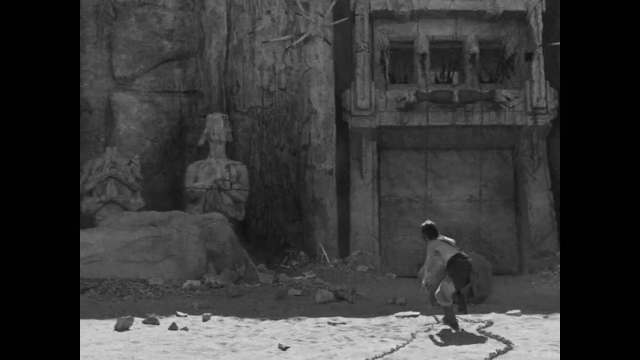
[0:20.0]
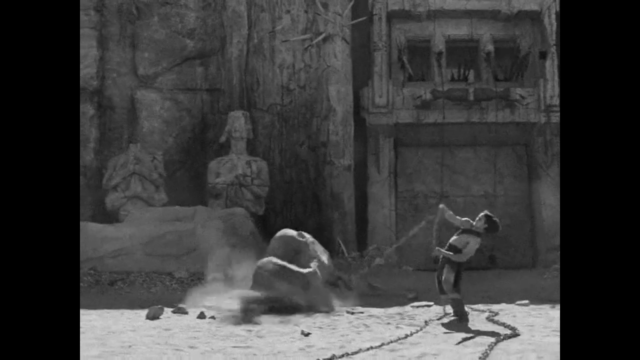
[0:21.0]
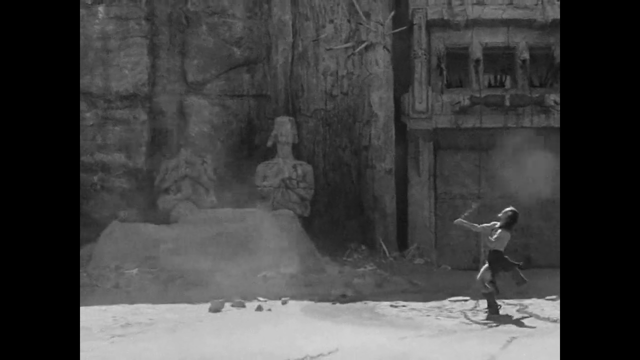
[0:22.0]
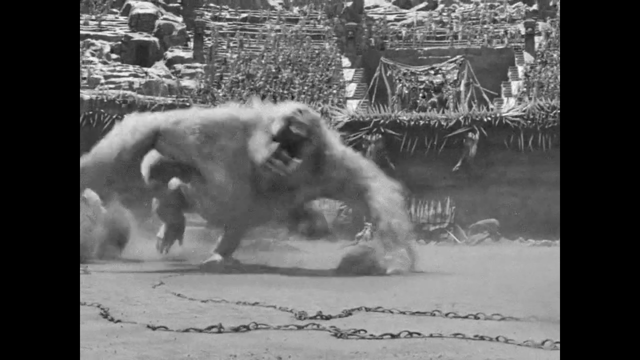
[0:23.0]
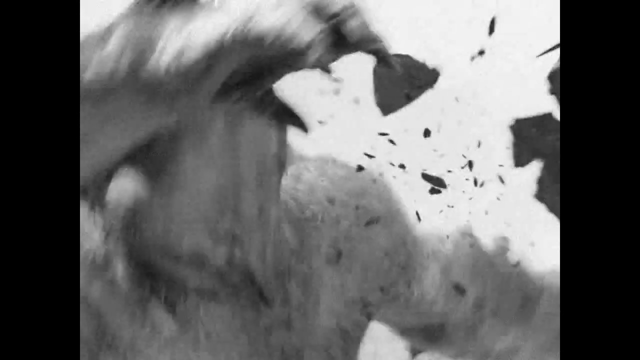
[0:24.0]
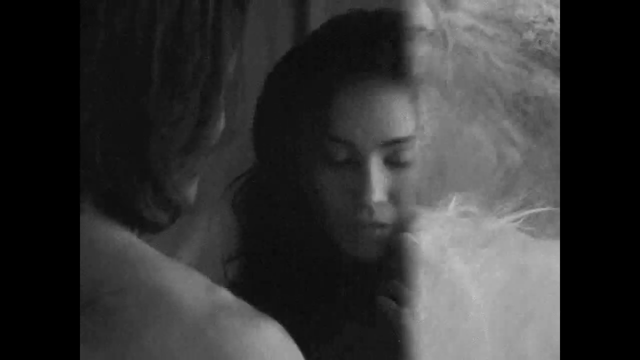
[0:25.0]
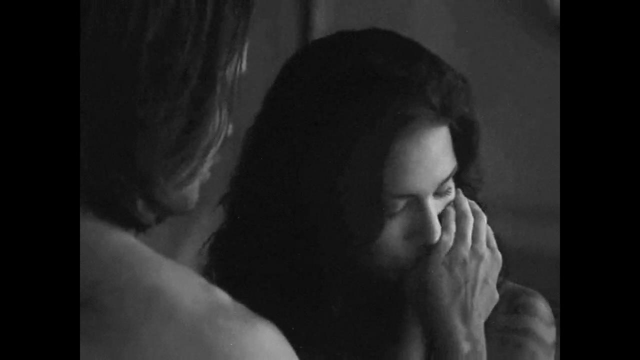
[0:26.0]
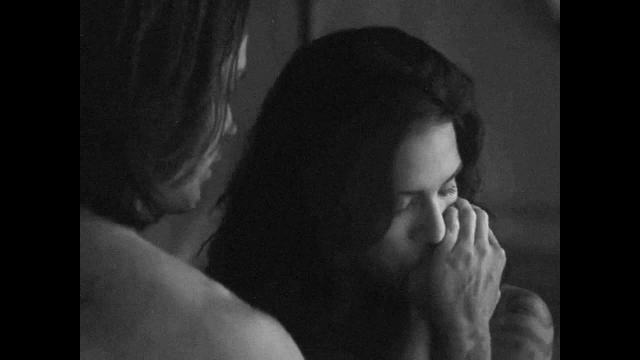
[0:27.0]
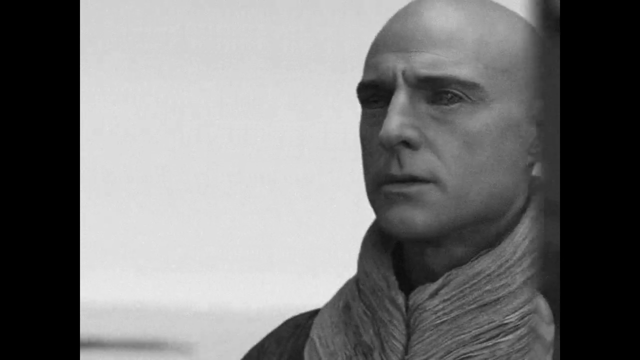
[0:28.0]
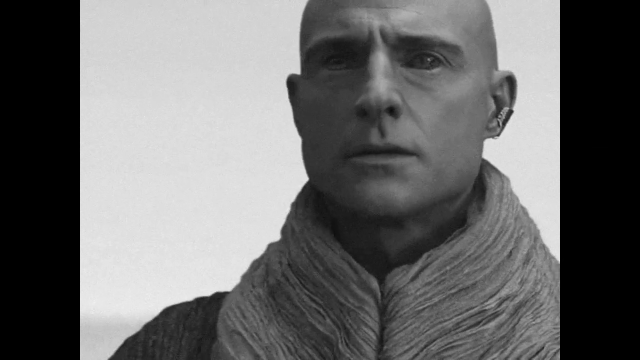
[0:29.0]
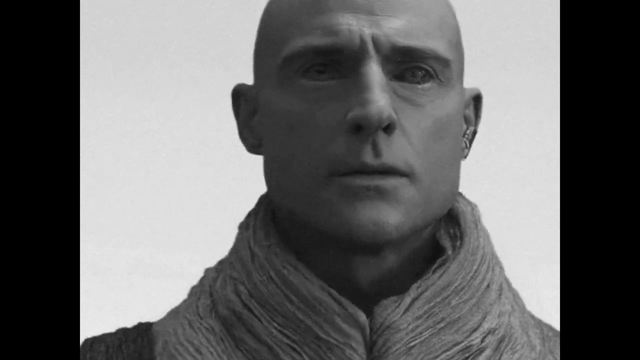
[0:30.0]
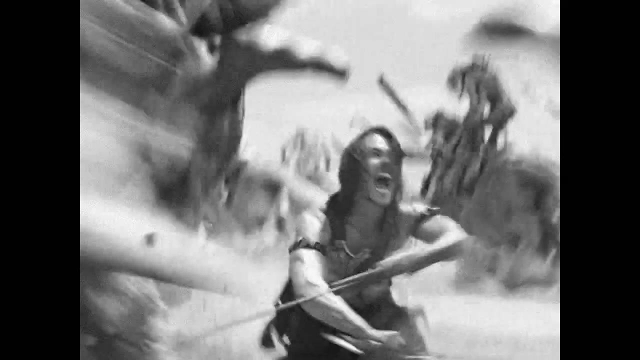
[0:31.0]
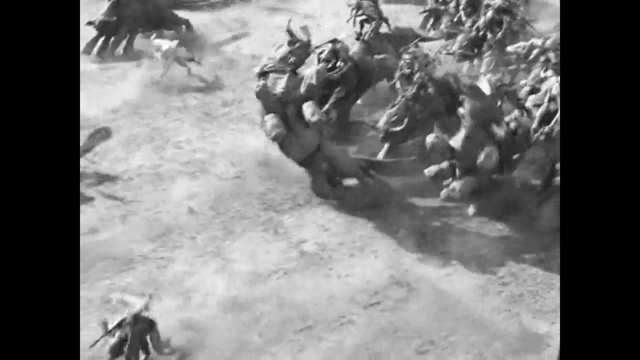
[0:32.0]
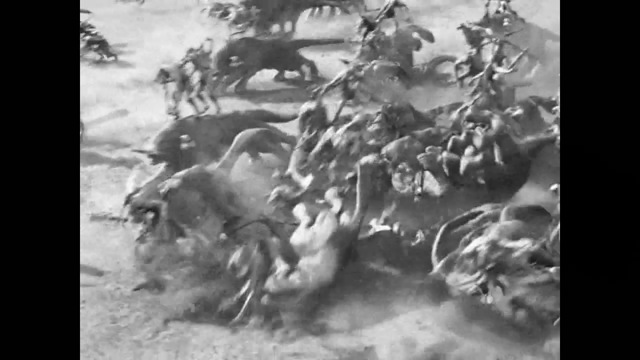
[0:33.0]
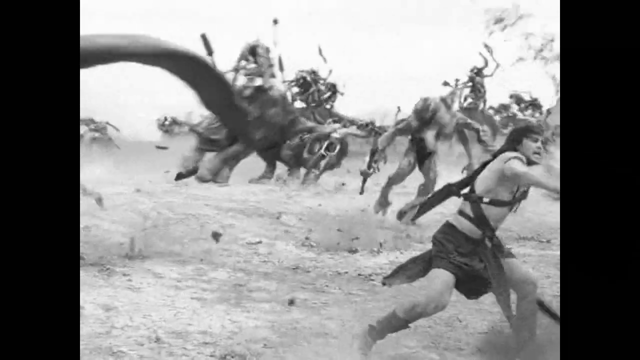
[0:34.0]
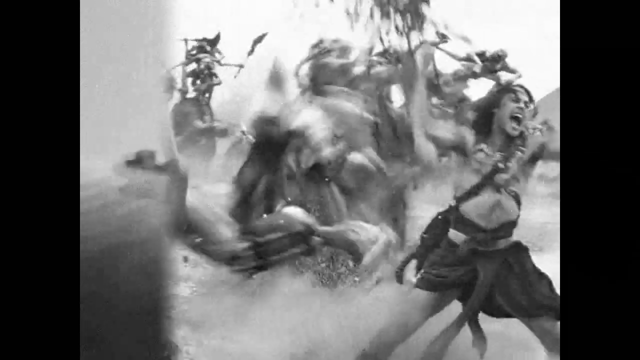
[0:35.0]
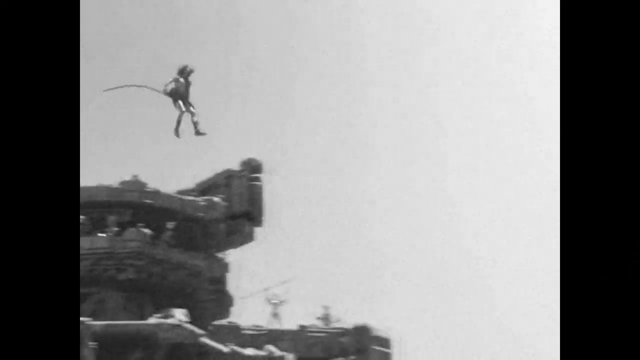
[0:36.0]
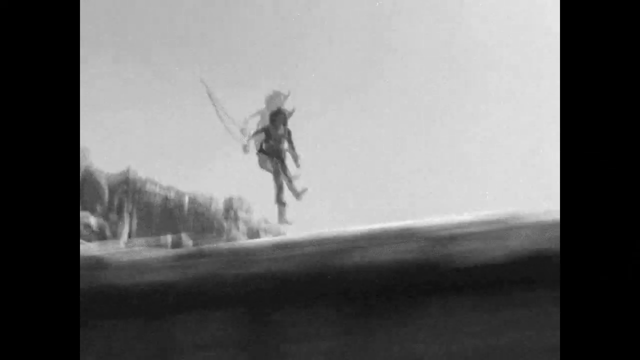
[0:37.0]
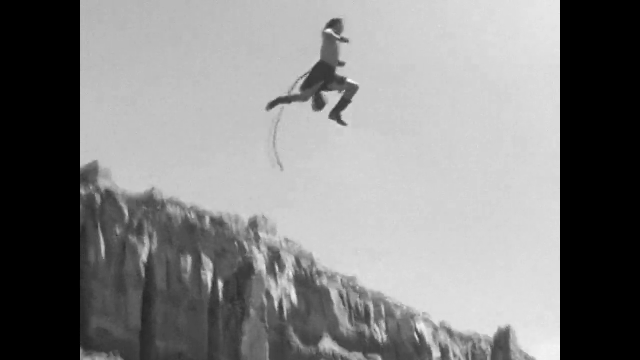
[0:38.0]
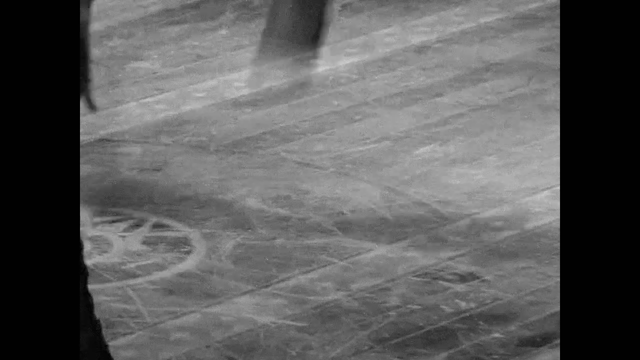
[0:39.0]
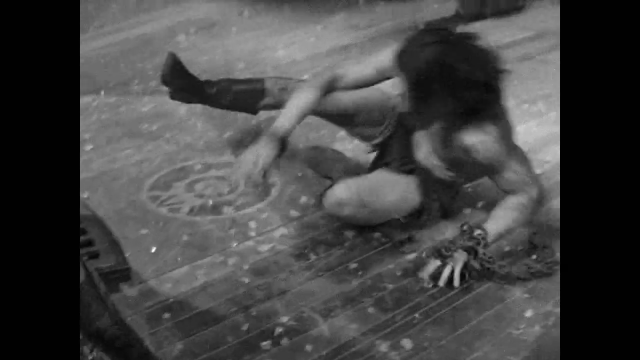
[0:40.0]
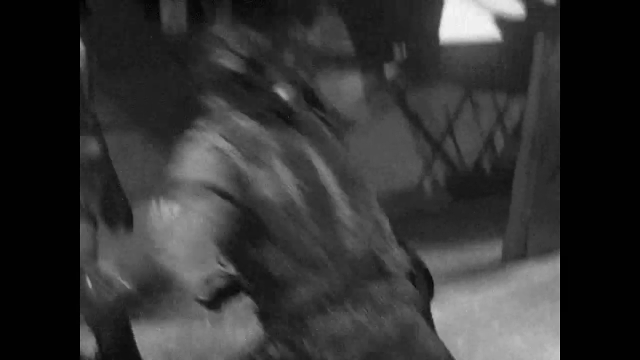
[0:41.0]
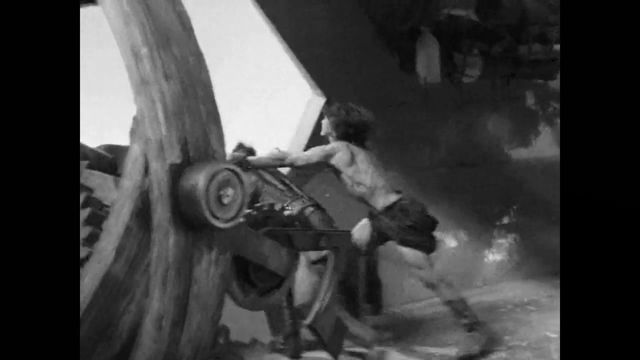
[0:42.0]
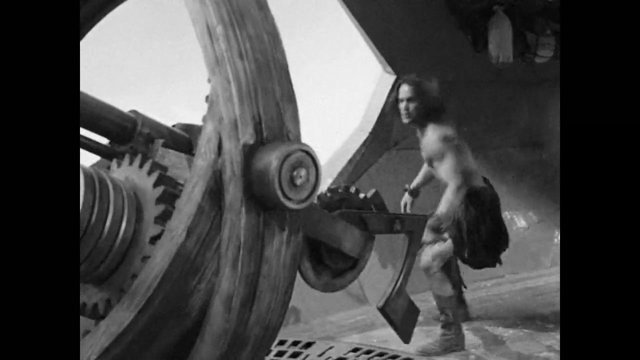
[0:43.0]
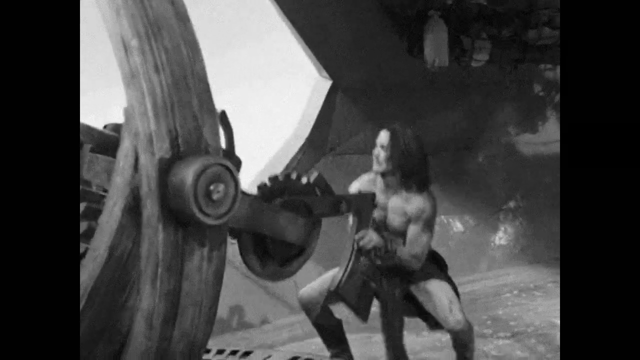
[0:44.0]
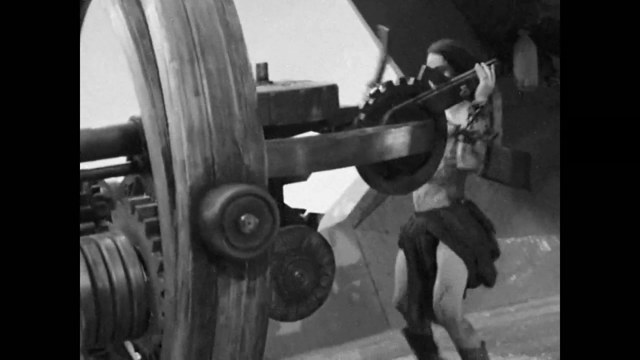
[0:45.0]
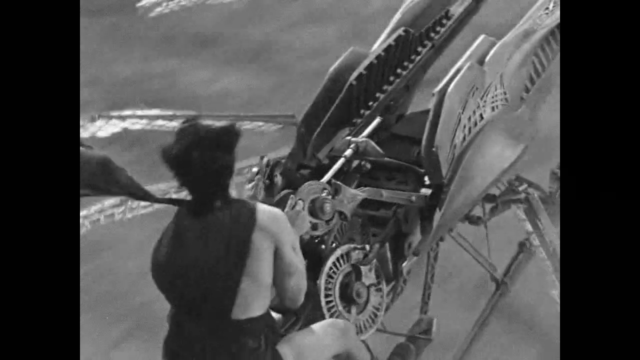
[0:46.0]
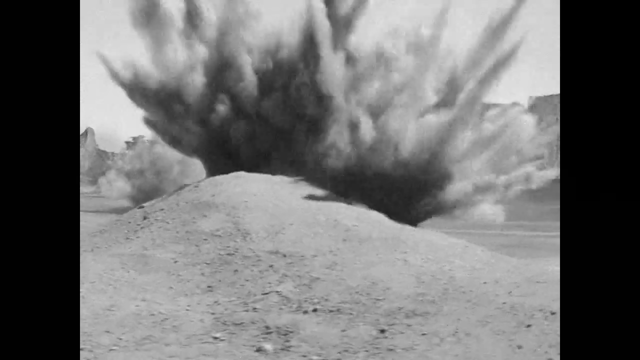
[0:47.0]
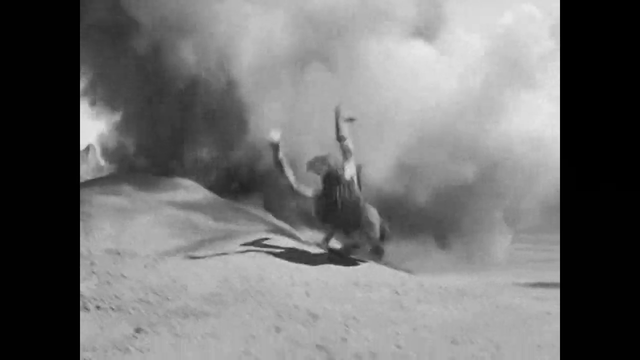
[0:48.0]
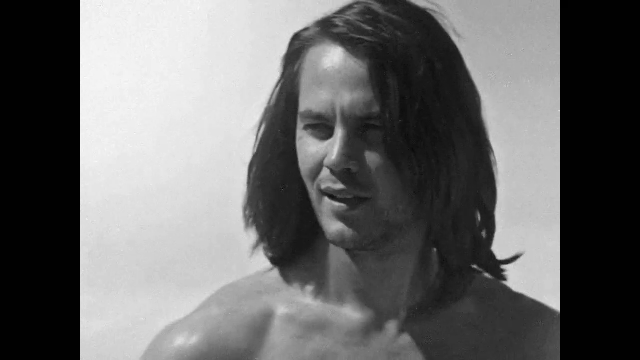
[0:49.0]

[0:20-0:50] A man looks at a statue and at what seems like a house with three windows; the black-and-white image is hard to make out. The man tries to grab a heavy rock held in chains and lift it into the air to send it at the beast that is trying to hurt him, and he succeeds: he swings the heavy rock around and around him and throws it at the huge beast, which falls down. A couple appears; the woman kisses the man's hand and looks worried. Next is a bald man with strange eyes and an expressionless face, looking as if he cannot move his face, everything stiff. The man with the rock then fights several more beasts like the one he hurt before. He flies, jumps very high and falls down inside the house, where there are other men he is trying to save. He uses some kind of gun and flies again. More men try to hurt him, and he fights everyone.